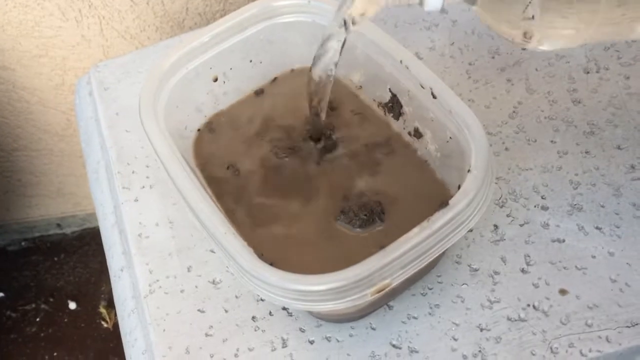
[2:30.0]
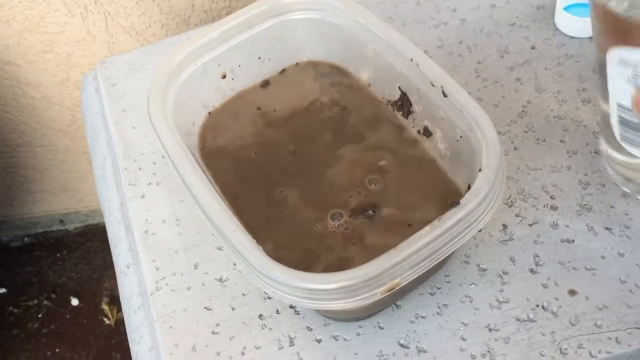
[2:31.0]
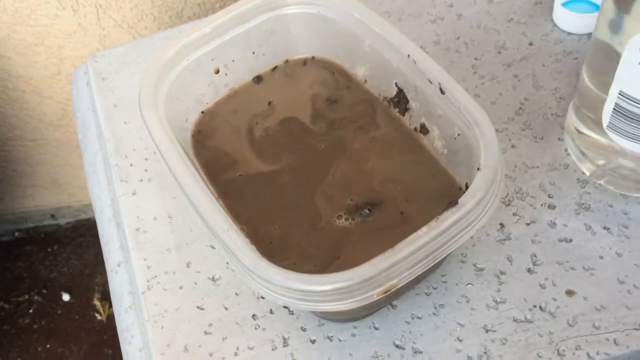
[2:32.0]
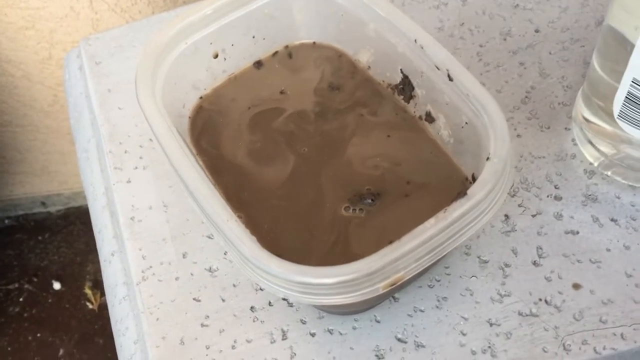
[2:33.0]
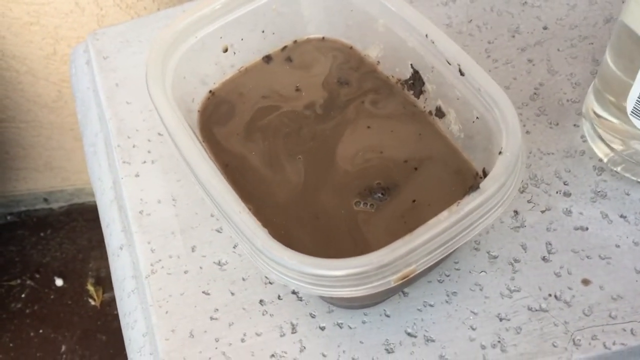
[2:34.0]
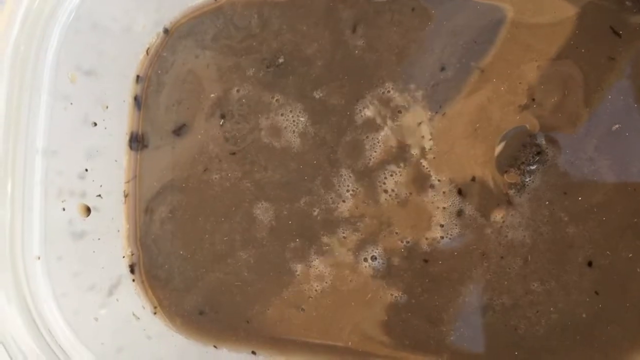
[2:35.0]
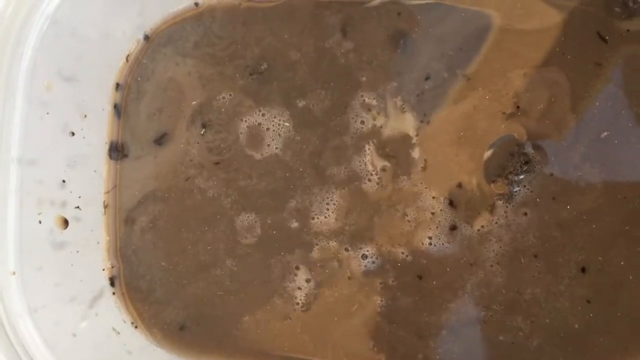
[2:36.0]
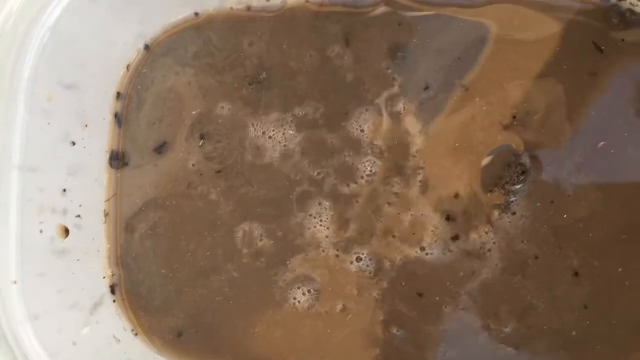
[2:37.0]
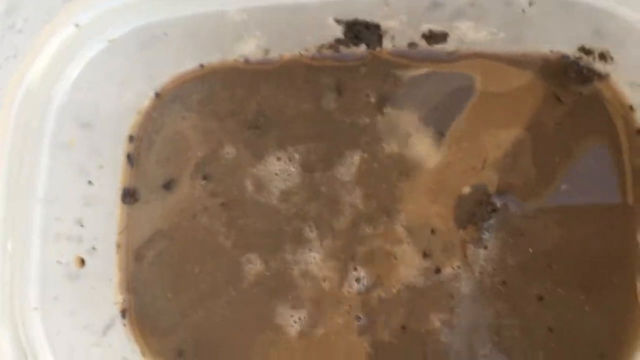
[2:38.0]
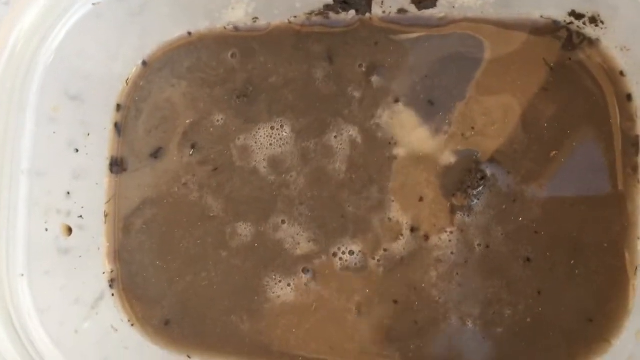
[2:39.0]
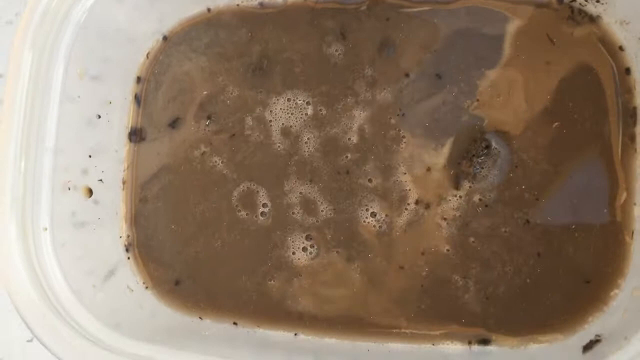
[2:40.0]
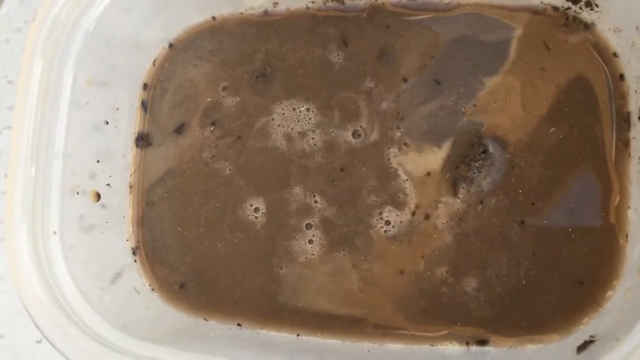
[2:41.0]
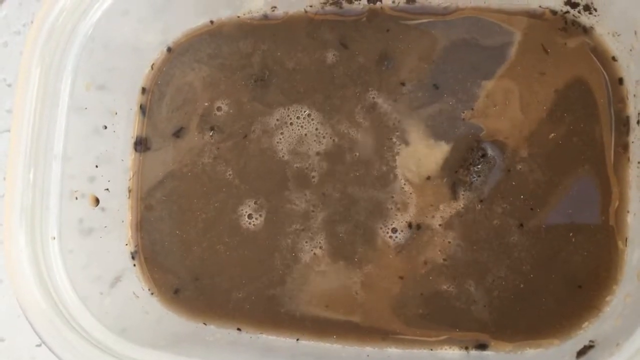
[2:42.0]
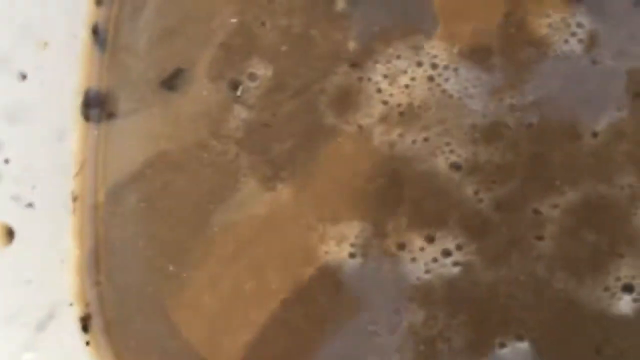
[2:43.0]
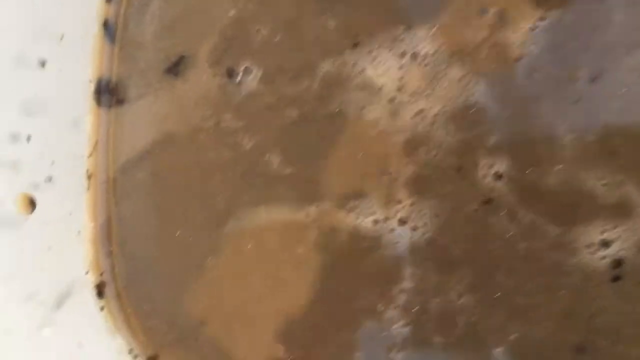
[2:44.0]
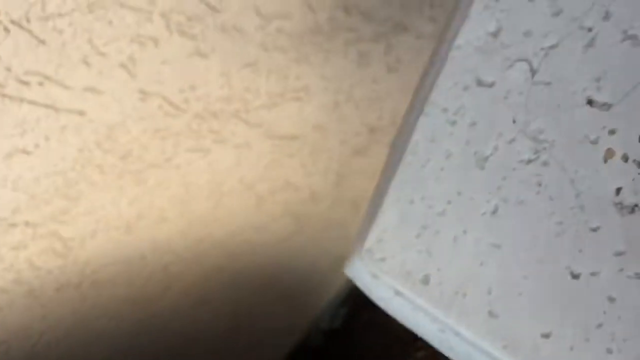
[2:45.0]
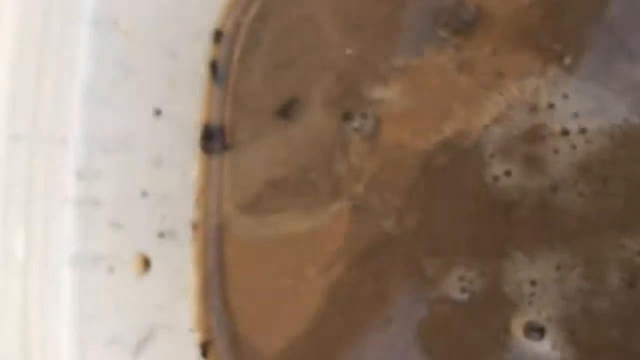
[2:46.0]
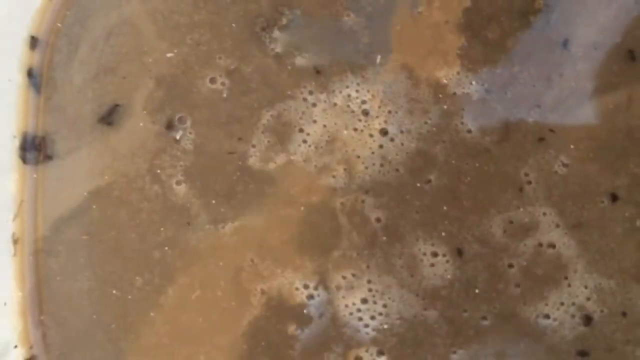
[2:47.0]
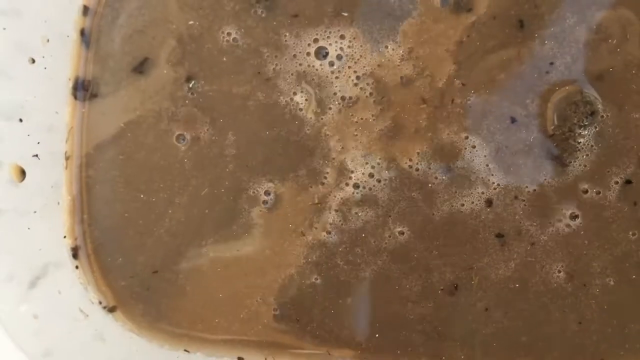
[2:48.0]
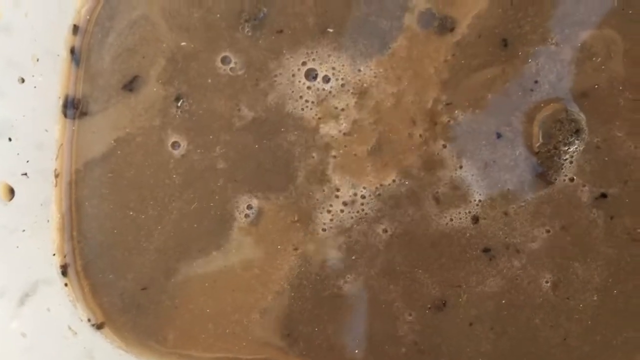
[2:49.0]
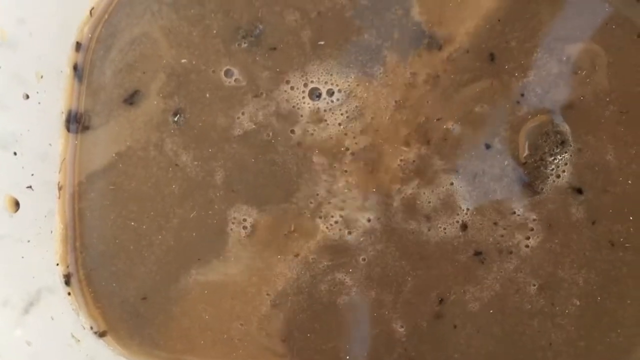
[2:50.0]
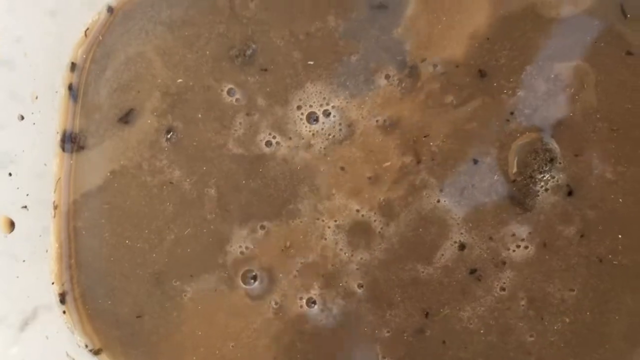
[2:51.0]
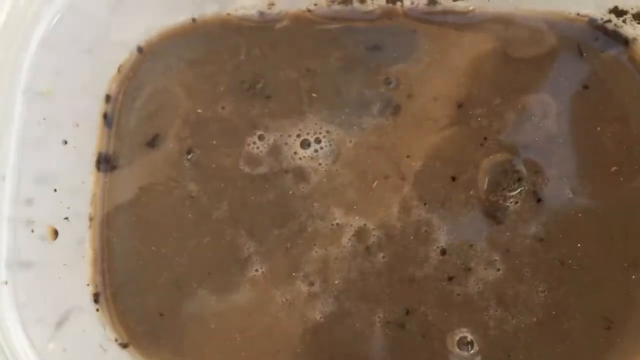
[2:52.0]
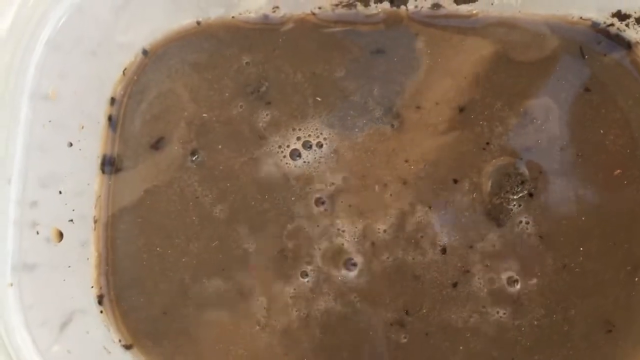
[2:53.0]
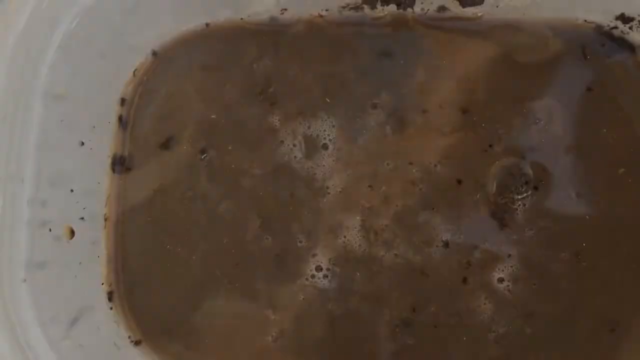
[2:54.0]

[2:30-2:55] The top of a white table is shown, with the ground visible at the bottom left of the screen and an off-white wall behind the table. On the left corner of the table is a small cubular Tupperware full of muddy water, and a bottle of vinegar is being poured into it. The vinegar is set down on the table. The view switches to a close-up of the inside of the Tupperware, where all the muddy water is foaming and bubbling. The camera pans away from the water and then back to it. Small bubbles and little bits of foam form; the foam does not cover the entire surface but comes up in places, apparently maybe three main spots in the center of the muddy water.